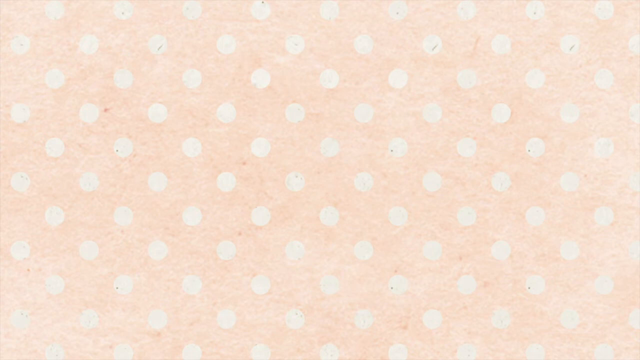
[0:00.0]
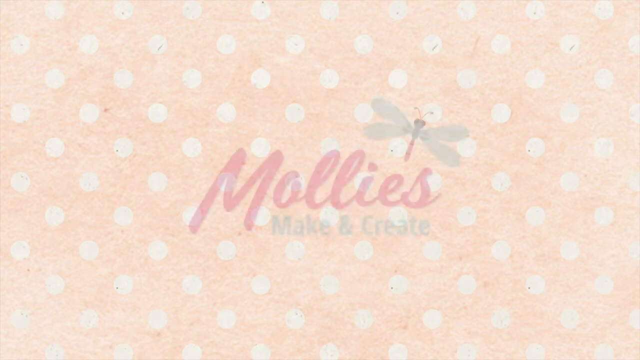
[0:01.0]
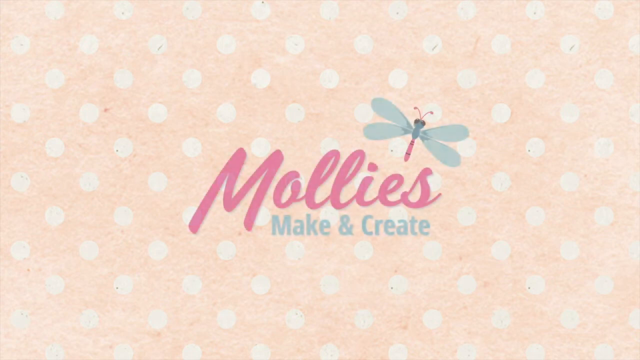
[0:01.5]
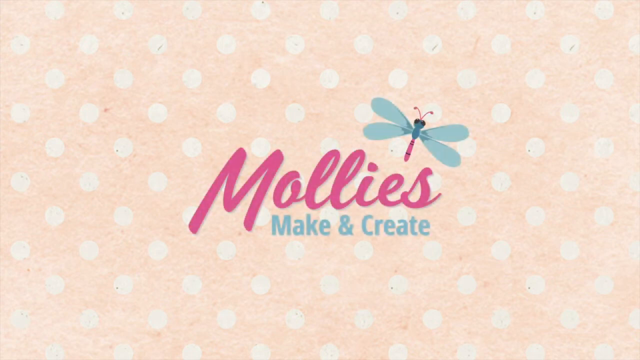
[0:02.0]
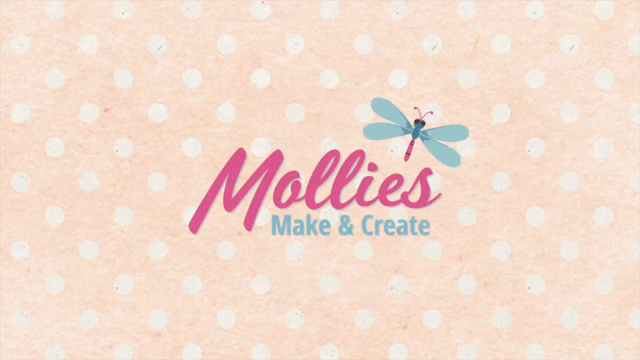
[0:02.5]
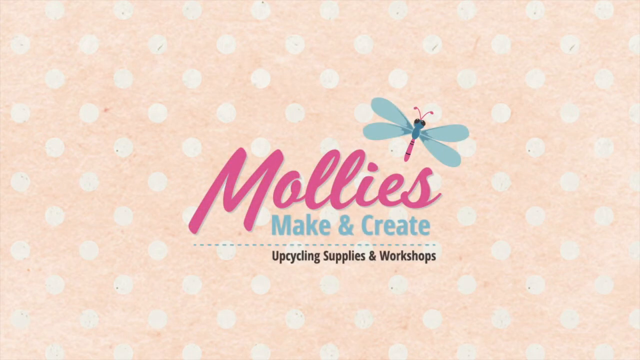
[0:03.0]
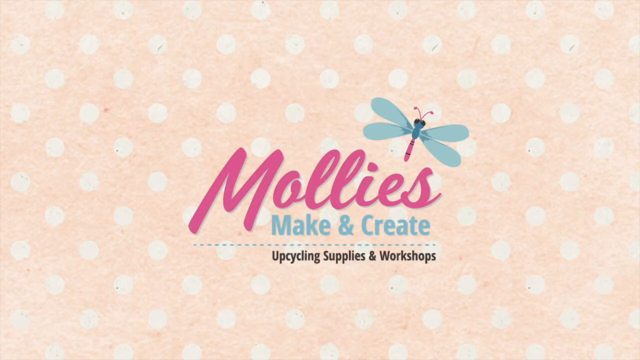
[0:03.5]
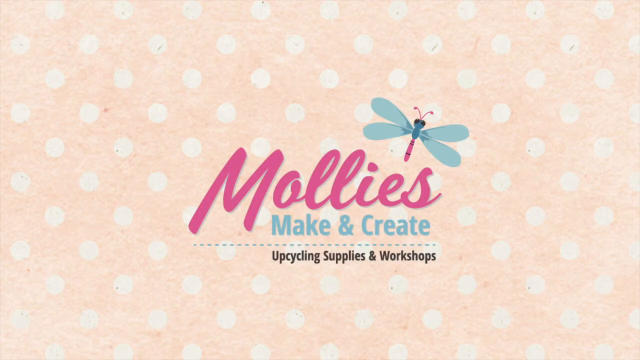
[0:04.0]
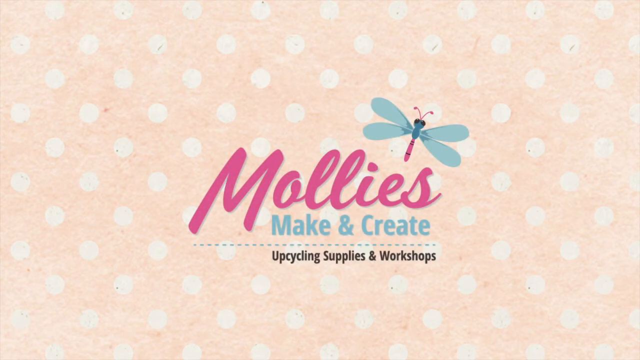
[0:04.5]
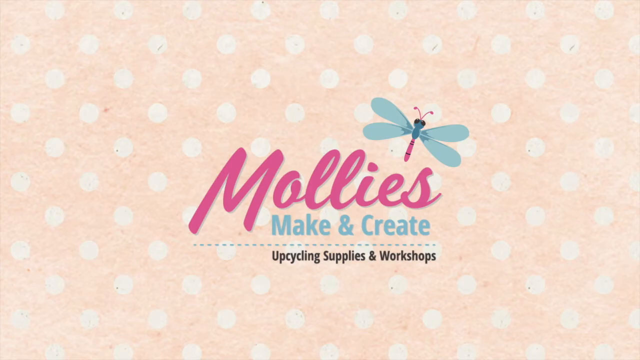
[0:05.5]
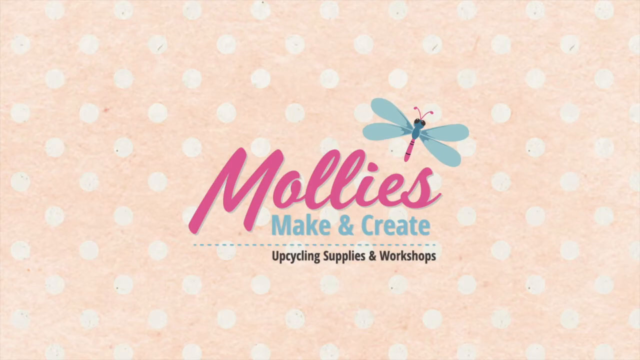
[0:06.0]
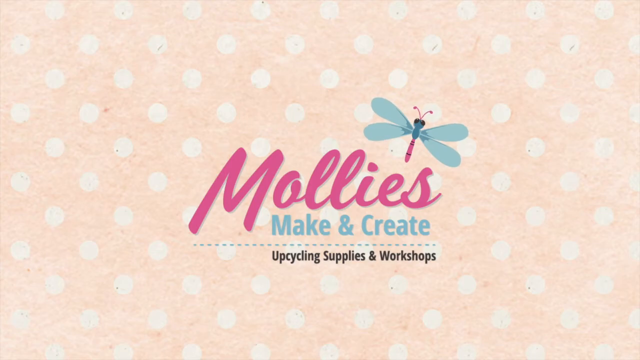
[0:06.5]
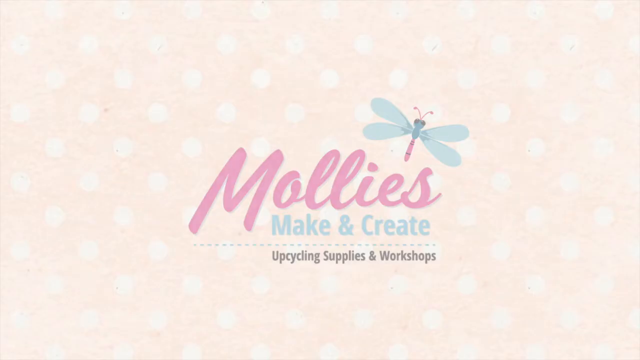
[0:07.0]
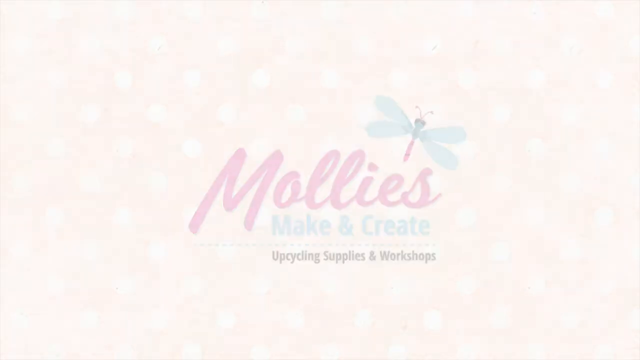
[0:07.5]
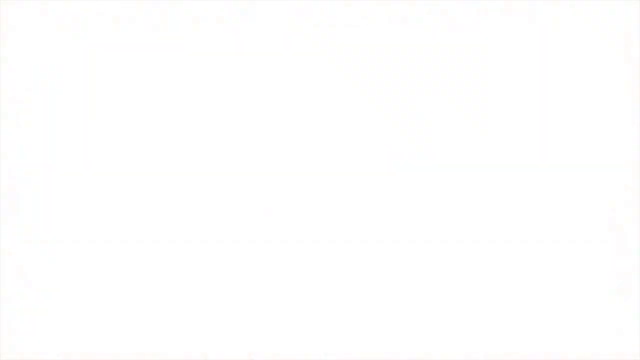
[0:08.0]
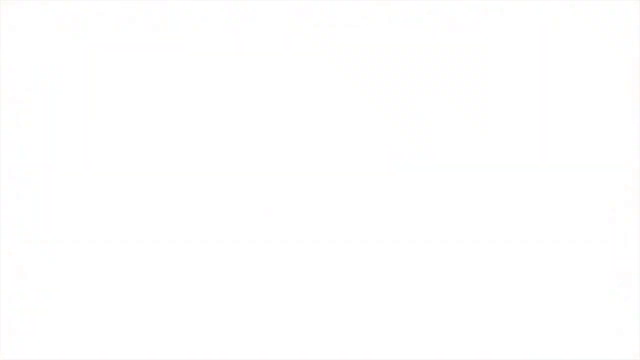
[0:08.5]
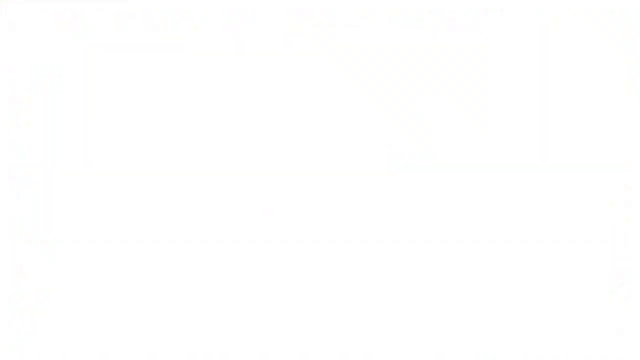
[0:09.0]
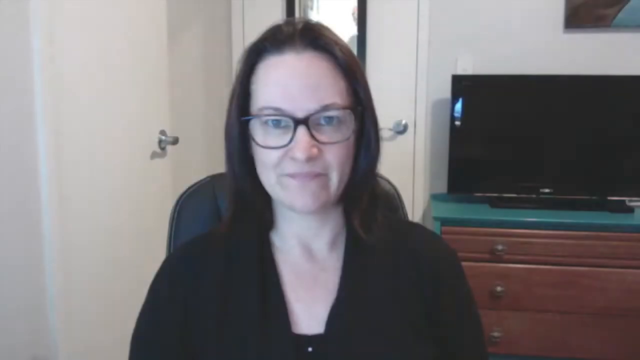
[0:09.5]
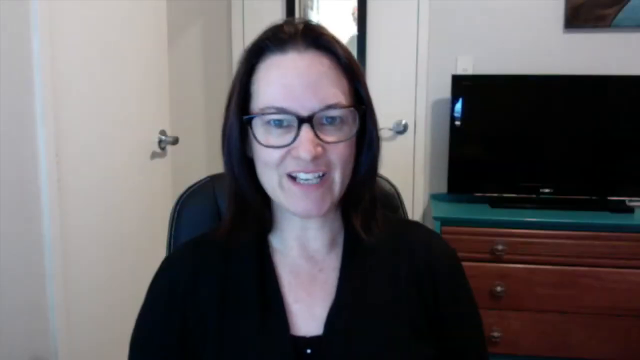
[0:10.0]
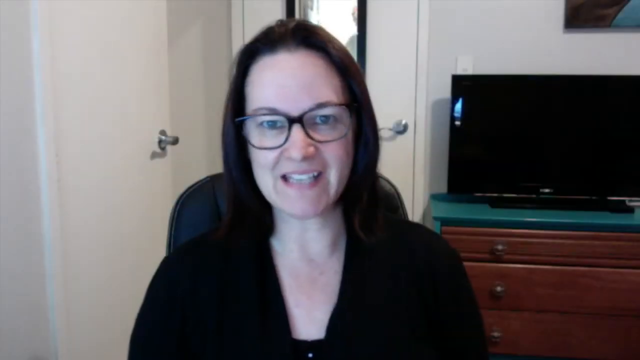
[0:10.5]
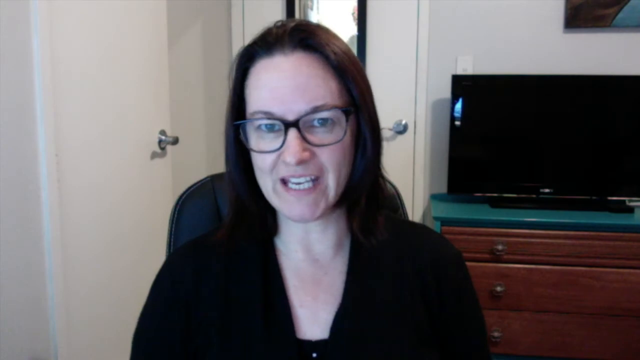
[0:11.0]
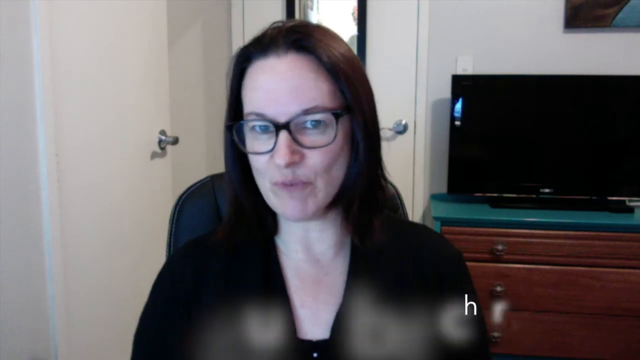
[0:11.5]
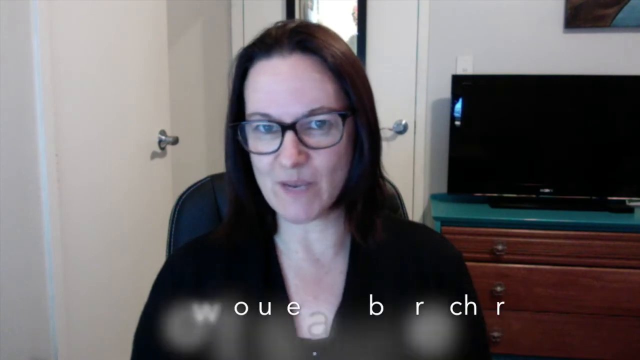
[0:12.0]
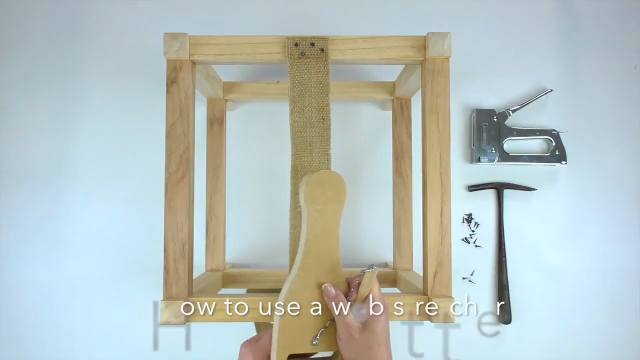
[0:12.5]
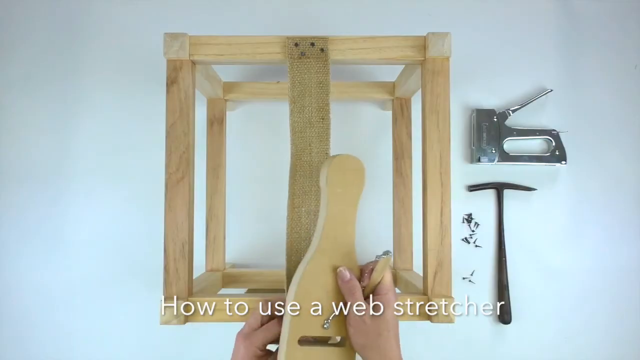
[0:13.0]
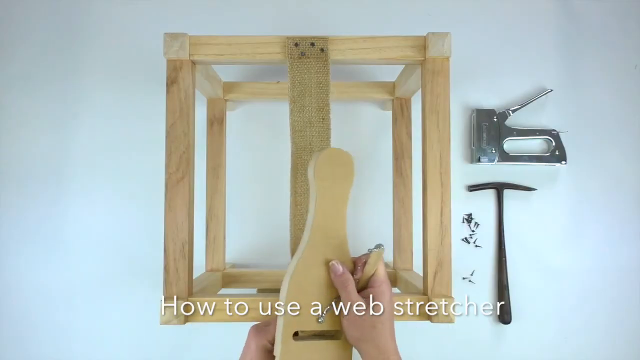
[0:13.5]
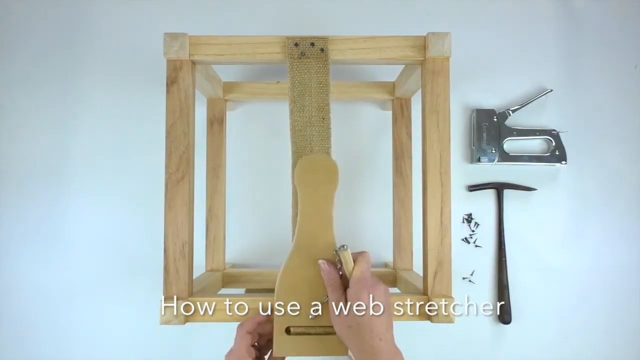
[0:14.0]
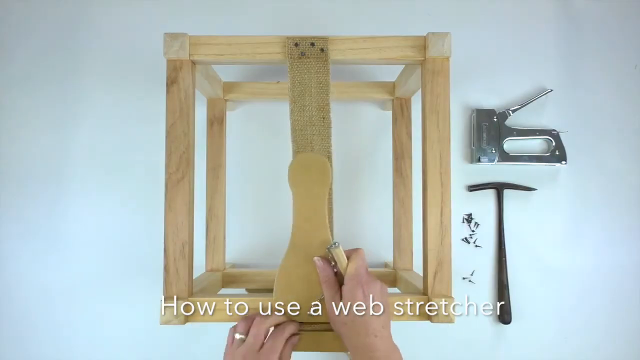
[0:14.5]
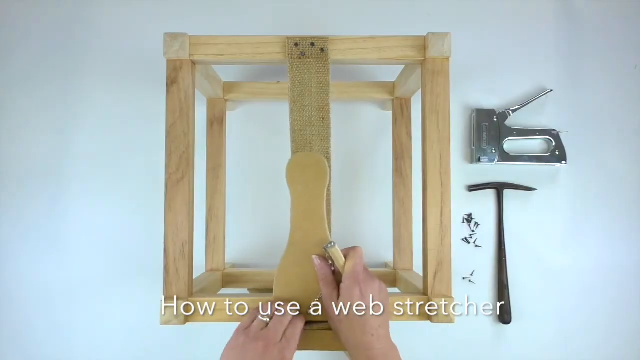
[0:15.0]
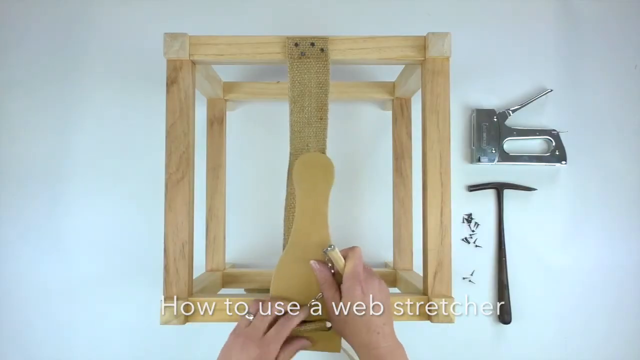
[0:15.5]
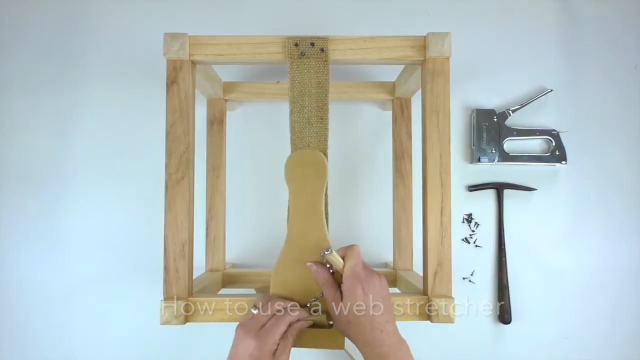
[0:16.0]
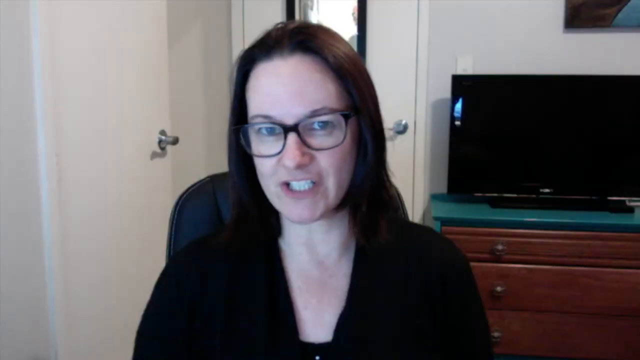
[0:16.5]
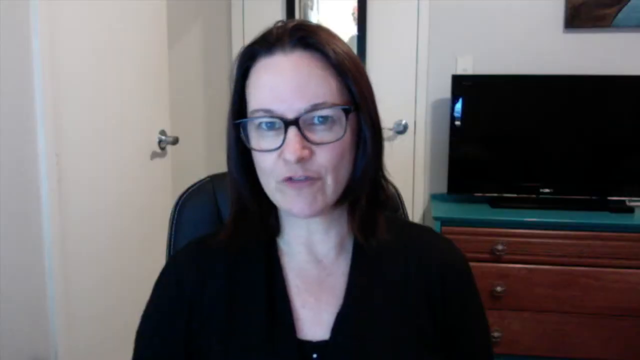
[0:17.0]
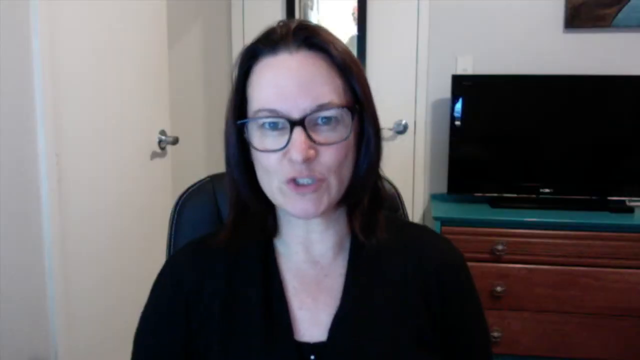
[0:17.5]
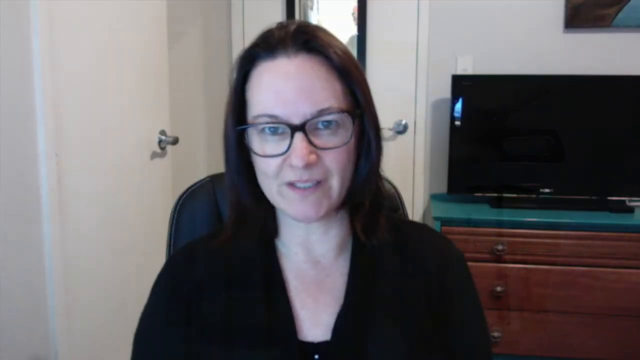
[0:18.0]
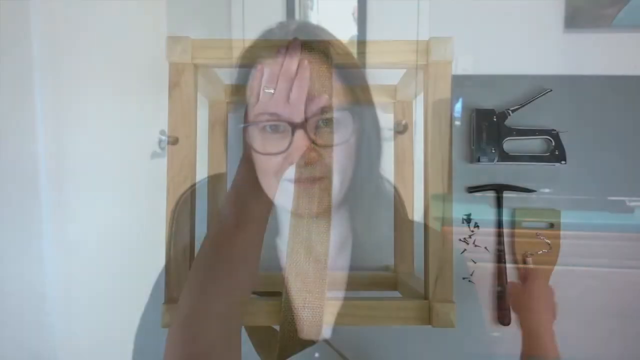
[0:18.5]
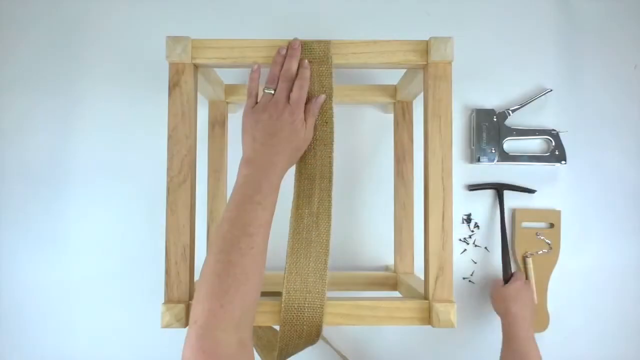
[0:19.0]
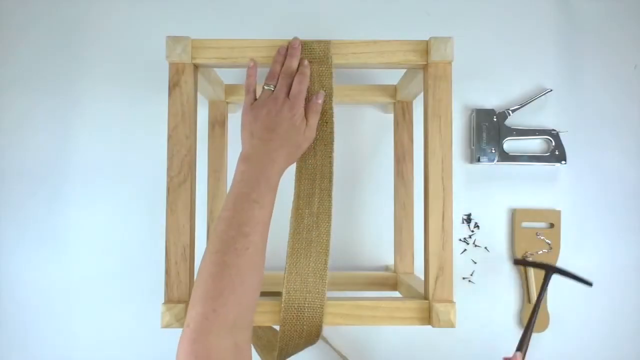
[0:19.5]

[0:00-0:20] The video opens on a cream-colored background with white polka dots. The word "Mollies" is on the screen, and what looks like a firefly is in the upper corner. Below that it says "Make and create," and below that the text "Upcycling supplies and workshops" pops up. The scene changes to a woman with brown hair and black-rimmed glasses sitting in a white room with a television behind her, speaking directly into the camera. It then cuts to what looks to be a wooden box with some tools, and the text reads "How to use a web stretcher." Hands are using the objects. The video then returns to the woman speaking directly into the camera.